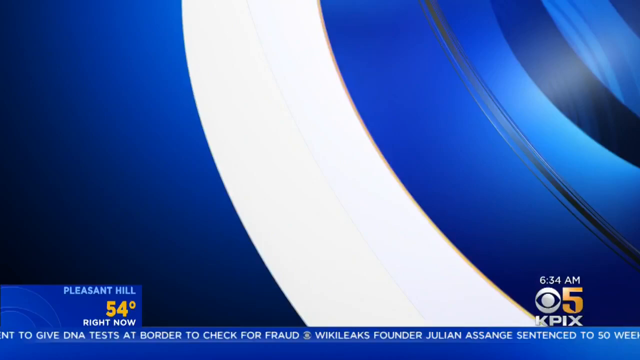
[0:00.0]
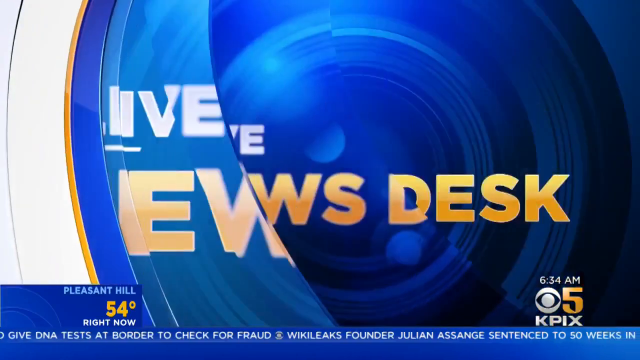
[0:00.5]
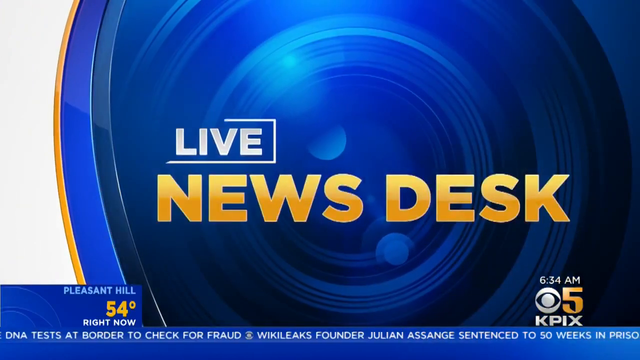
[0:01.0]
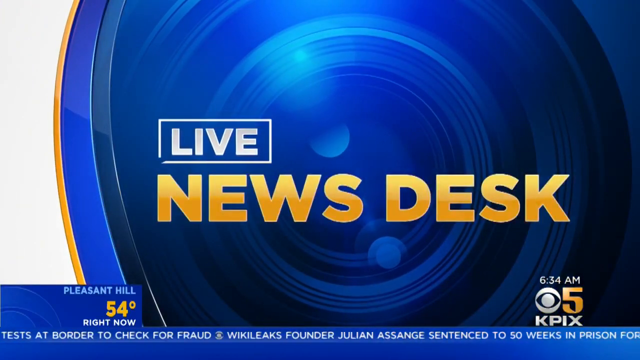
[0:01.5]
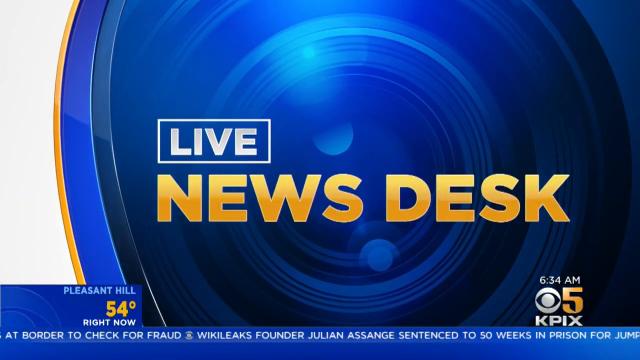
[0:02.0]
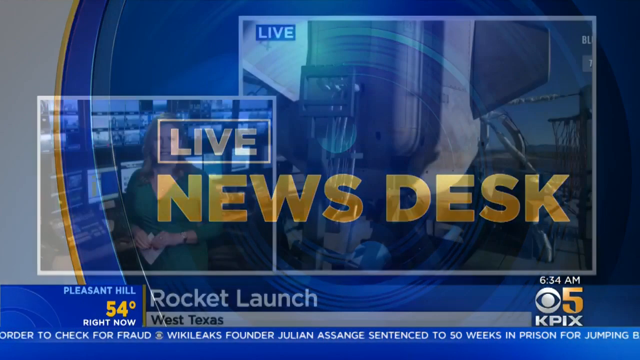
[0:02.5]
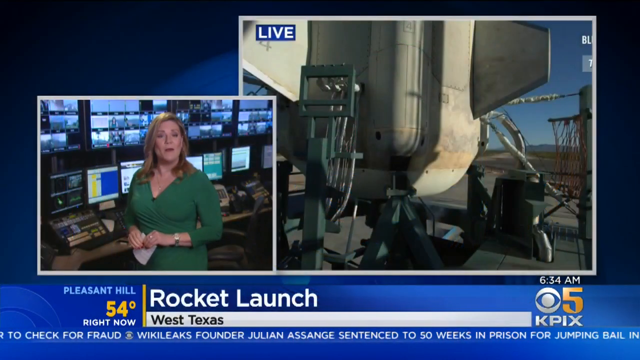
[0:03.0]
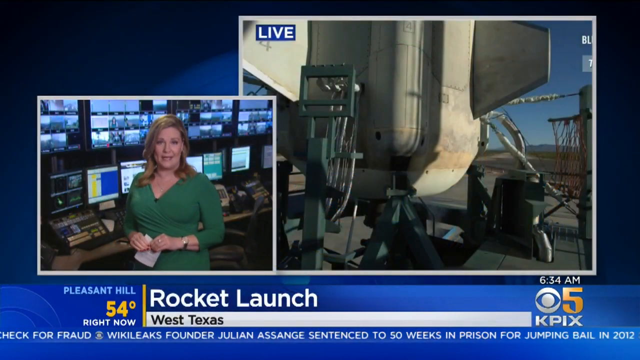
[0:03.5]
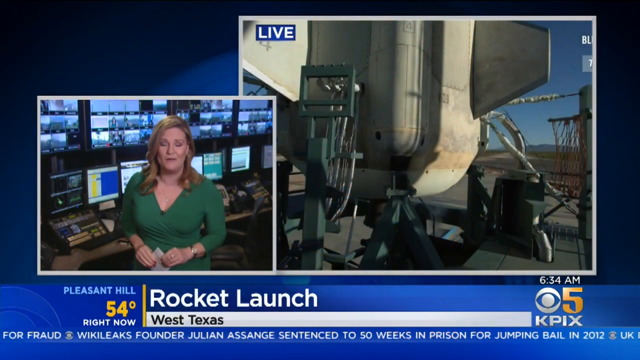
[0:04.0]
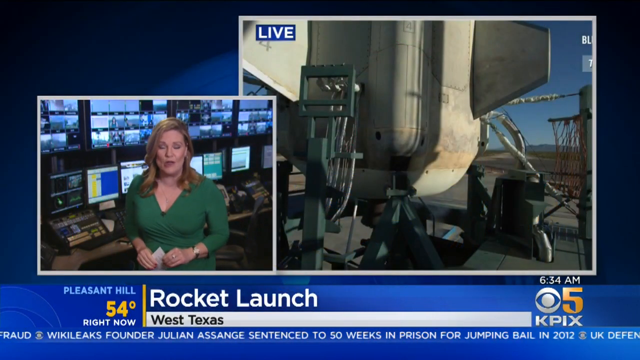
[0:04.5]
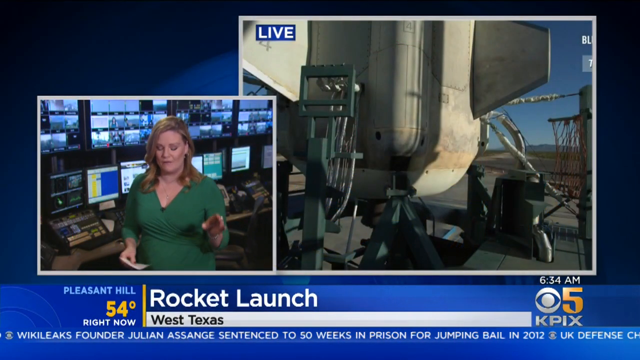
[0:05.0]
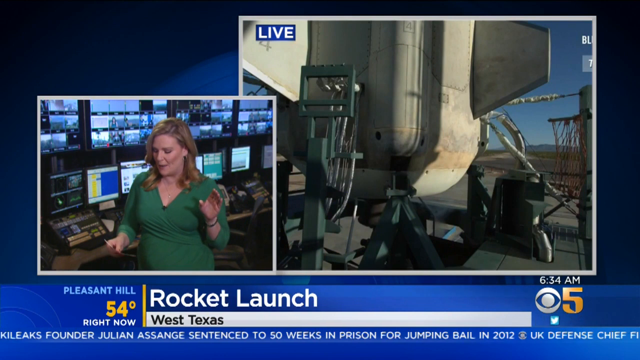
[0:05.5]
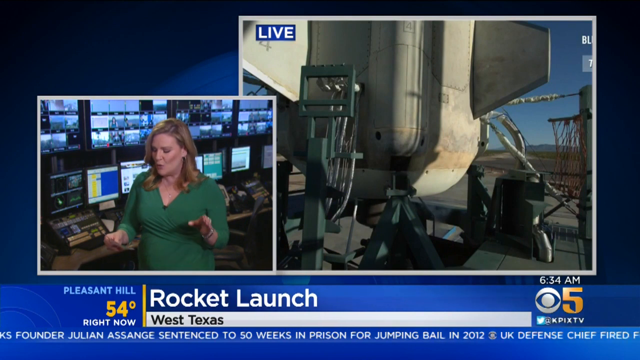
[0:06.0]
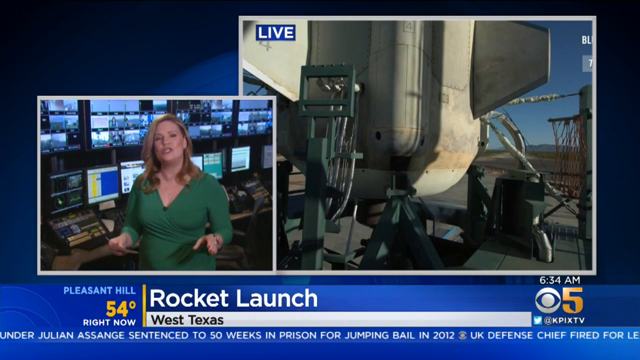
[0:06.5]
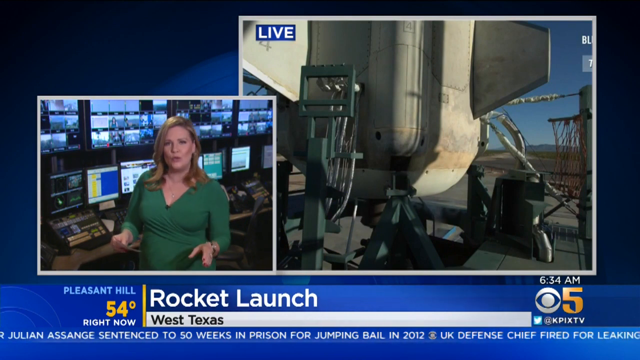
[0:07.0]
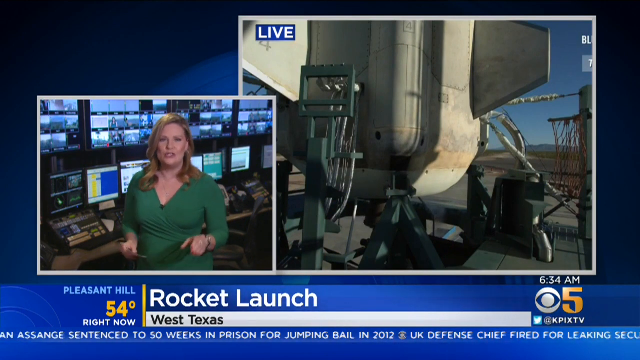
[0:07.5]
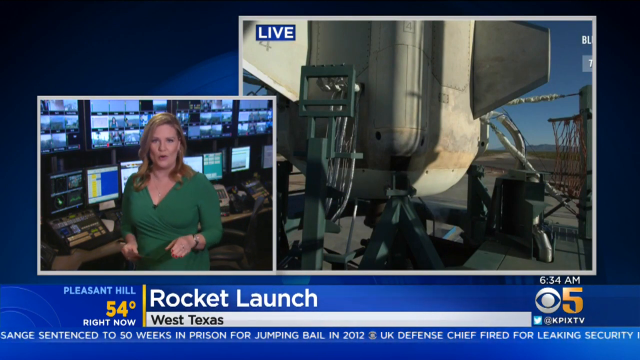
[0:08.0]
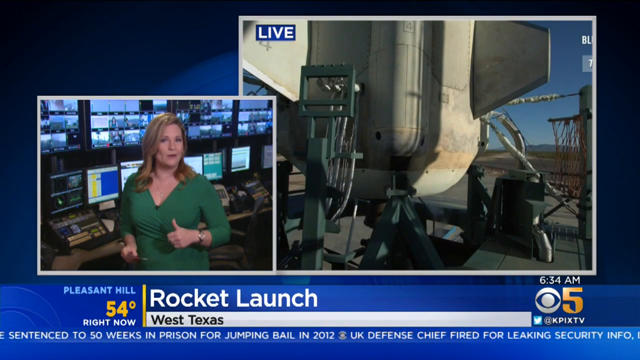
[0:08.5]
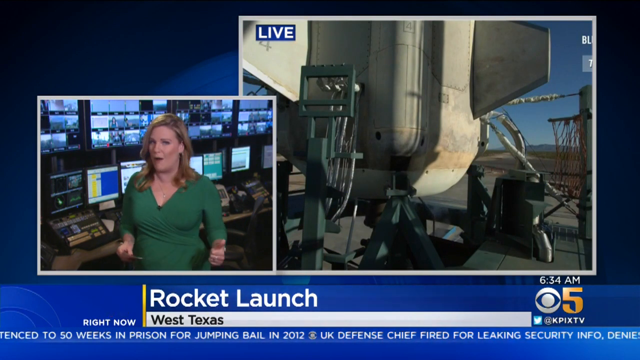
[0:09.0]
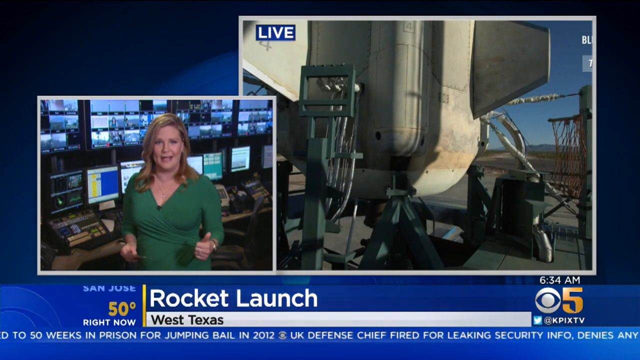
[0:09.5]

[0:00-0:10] The video is a news clip. It opens with the news station's logo running across the screen, reading "live news desk." The screen then shows two picture frames. In the small box, a woman in a green dress is speaking. The banner across the bottom reads "rocket launch west Texas," and to the left it shows 54 degrees. The main box shows what appears to be a rocket ship. The woman speaks, with what appears to be a little piece of paper in her hand, stares into the camera and gives a slight thumbs up. The rocket footage shows a clear, sunny day. In the bottom right of the screen the time reads 6:34 a.m.